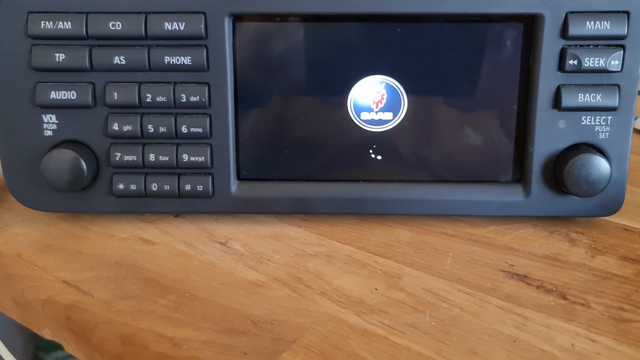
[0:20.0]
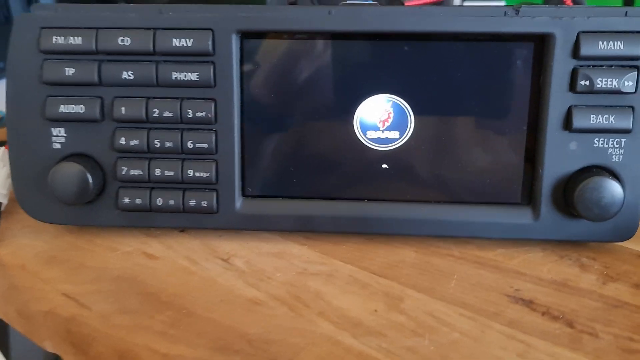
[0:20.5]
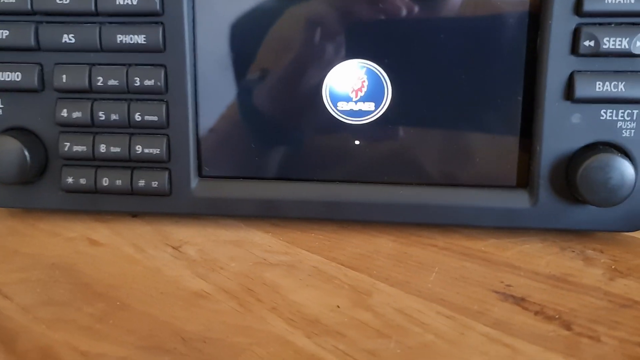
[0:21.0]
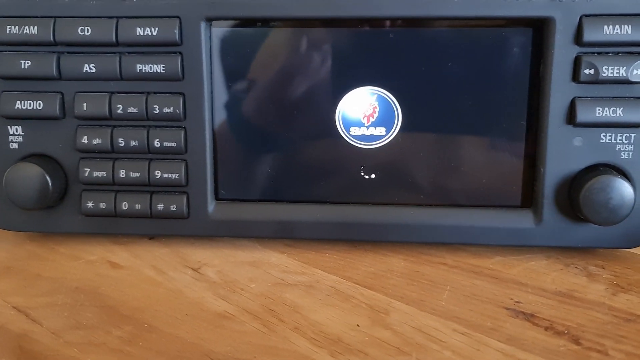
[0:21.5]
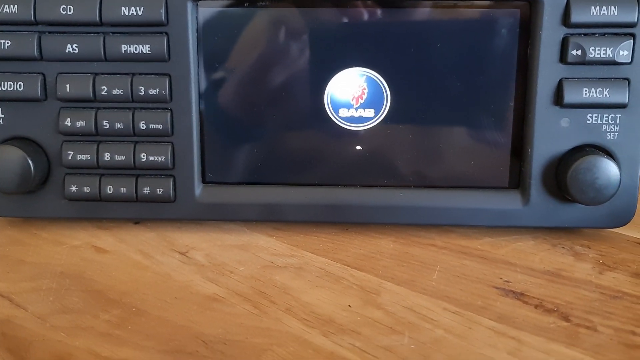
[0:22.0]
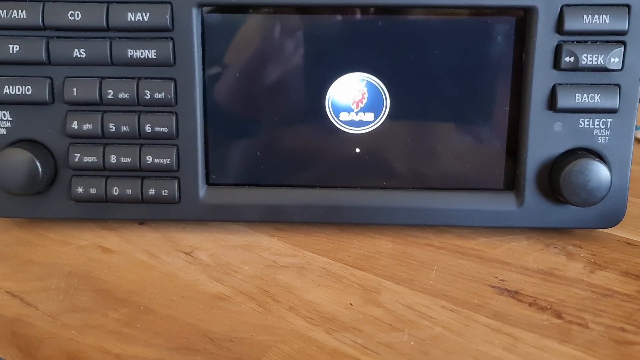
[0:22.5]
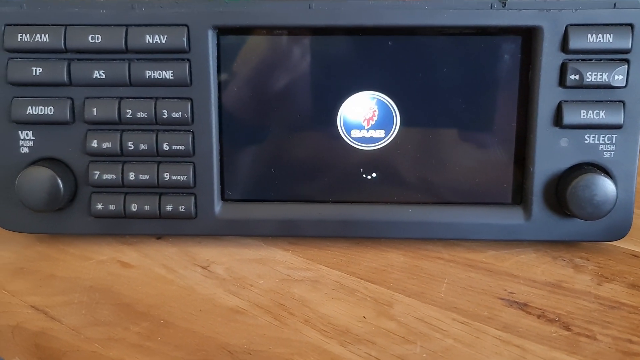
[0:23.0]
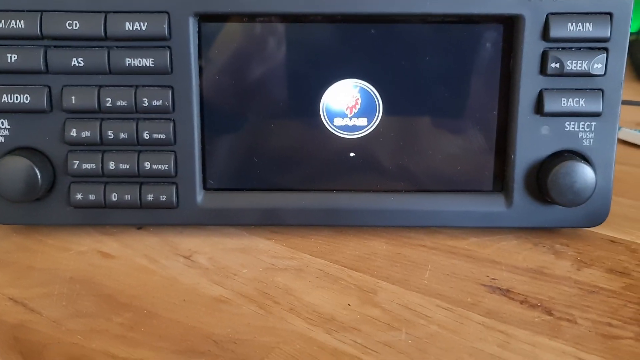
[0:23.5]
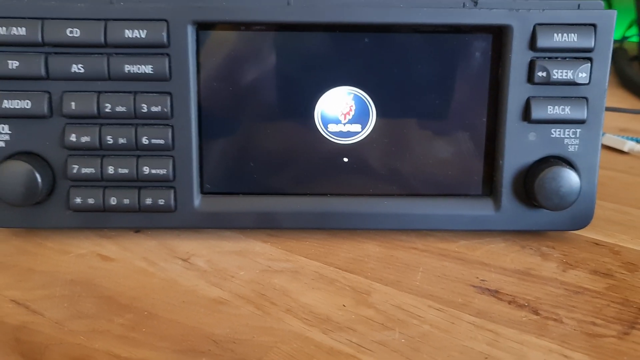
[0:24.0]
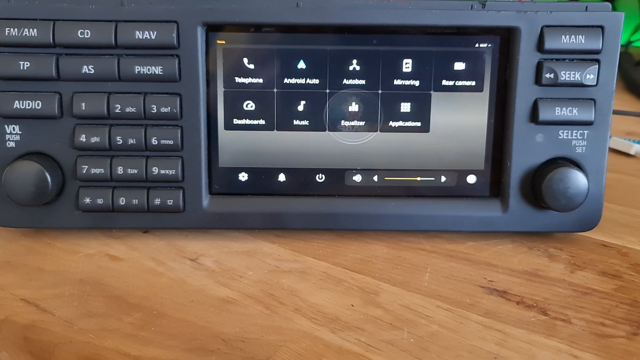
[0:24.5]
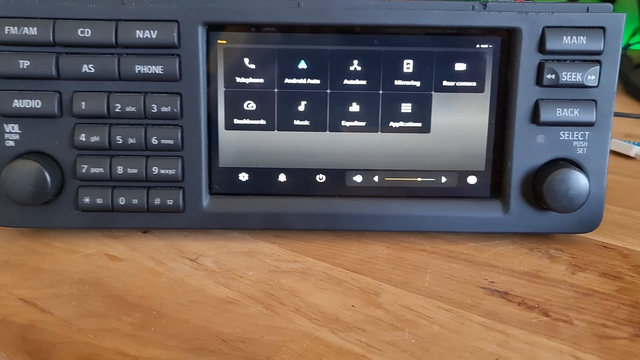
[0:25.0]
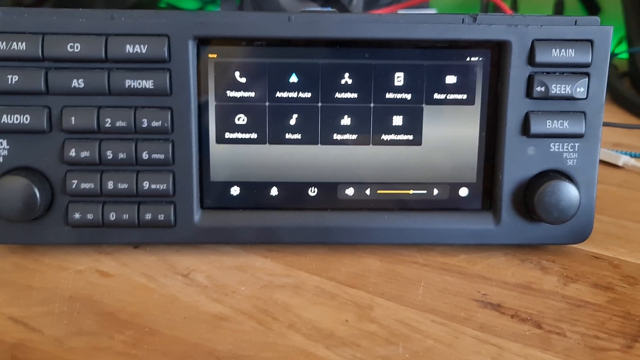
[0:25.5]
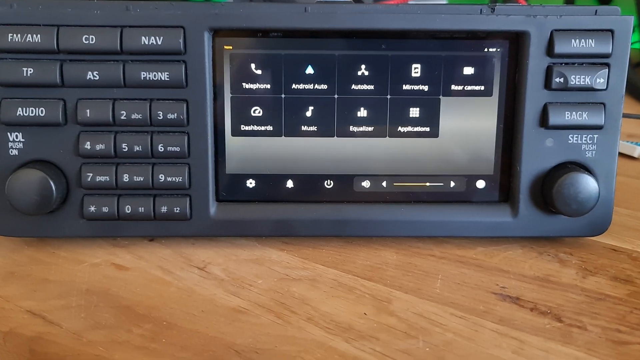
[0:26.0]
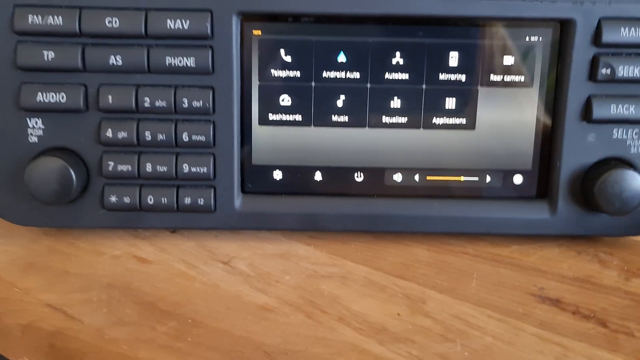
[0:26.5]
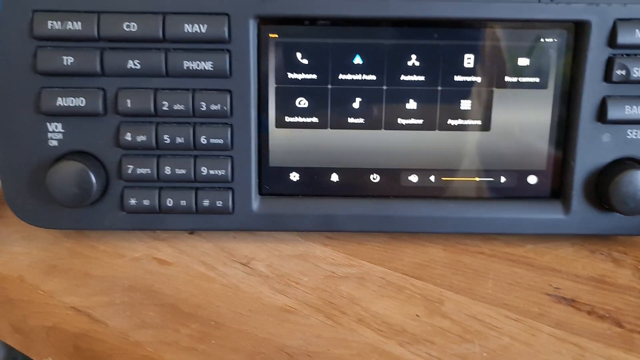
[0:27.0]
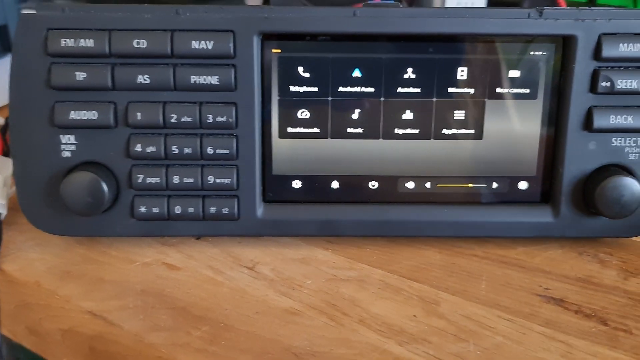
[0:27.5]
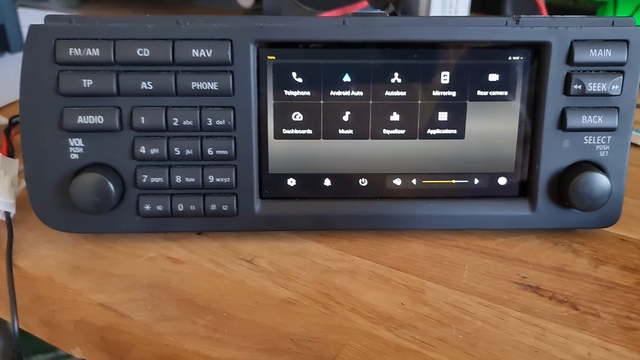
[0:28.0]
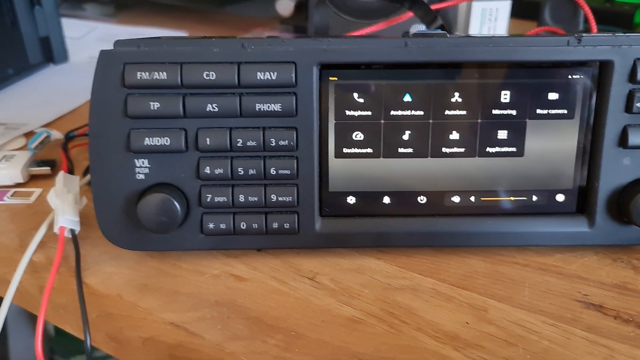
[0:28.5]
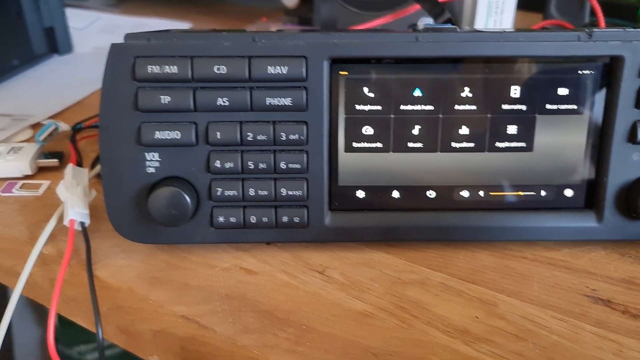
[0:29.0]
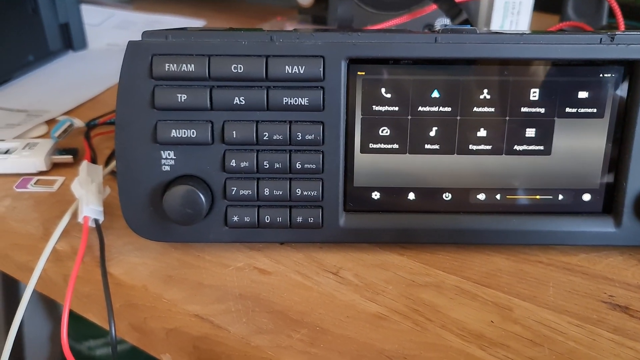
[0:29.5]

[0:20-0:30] The Saab logo continues loading, and then a set of icons appears on the screen, probably function buttons that the phone is transferring to the car radio. The car radio is sitting on a table, and when the camera moves, things next to it become visible: what looks like a SIM card, and something like a memory stick or maybe a USB device. The function buttons on the screen are small and hard to read, but there are nine of them, including a telephone, Android Auto, AutoBox and music. There is also a volume indicator, an alarm symbol and a settings icon.